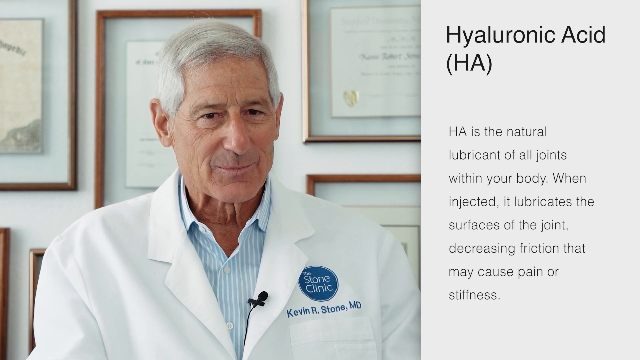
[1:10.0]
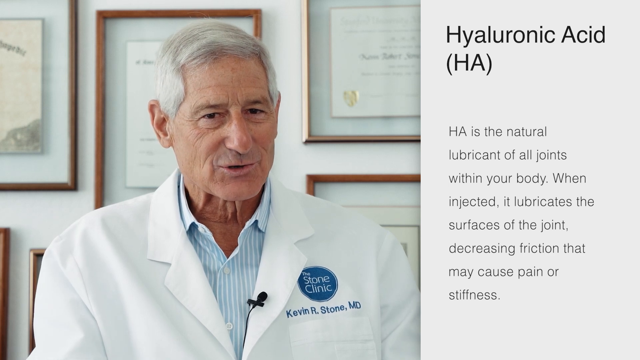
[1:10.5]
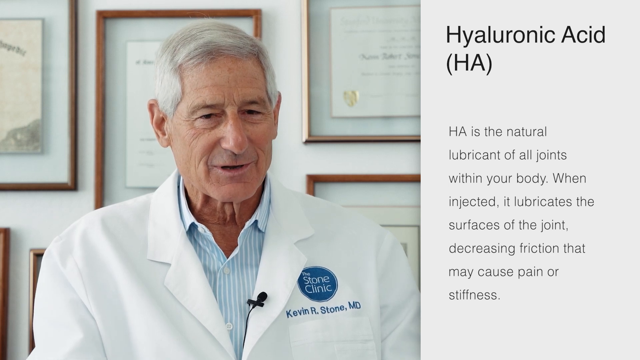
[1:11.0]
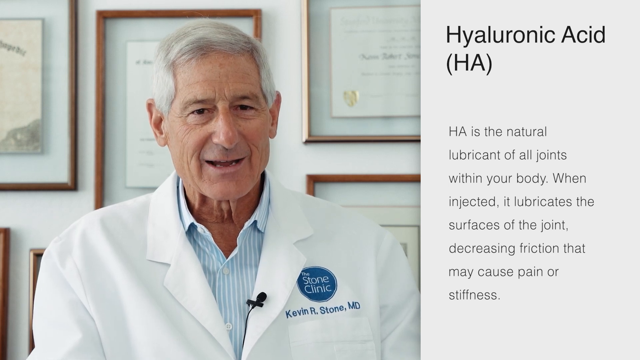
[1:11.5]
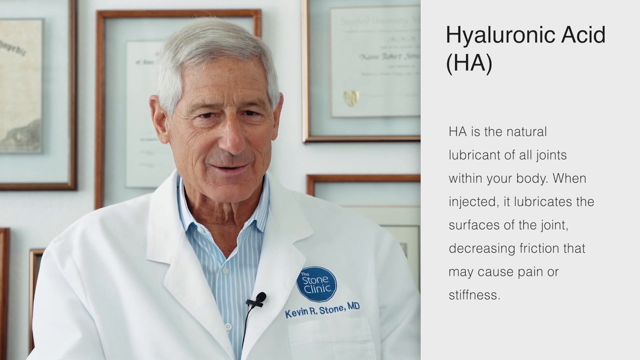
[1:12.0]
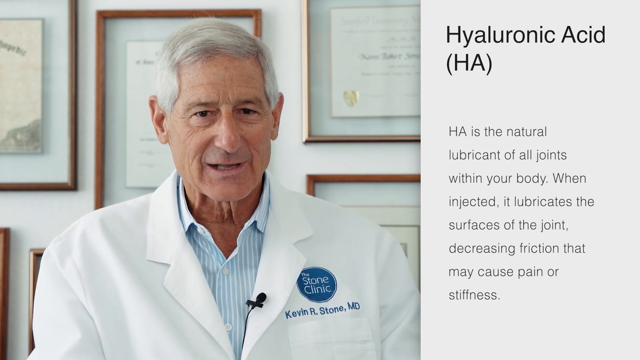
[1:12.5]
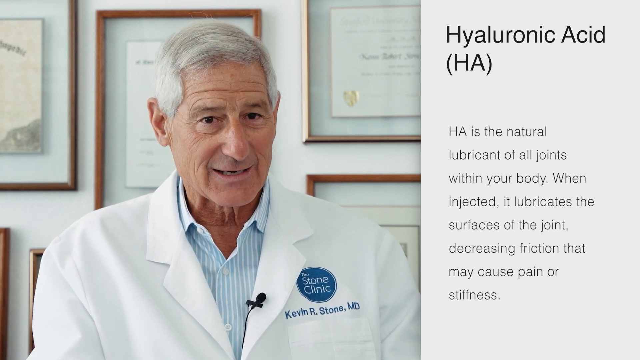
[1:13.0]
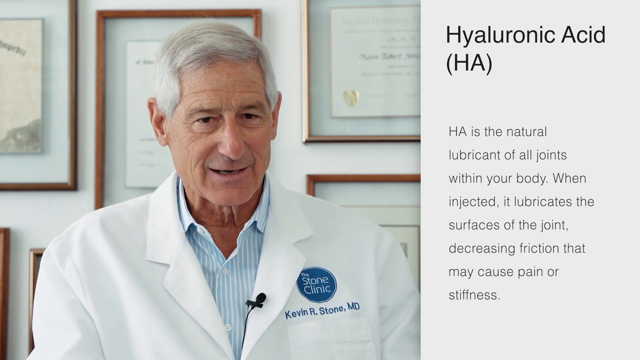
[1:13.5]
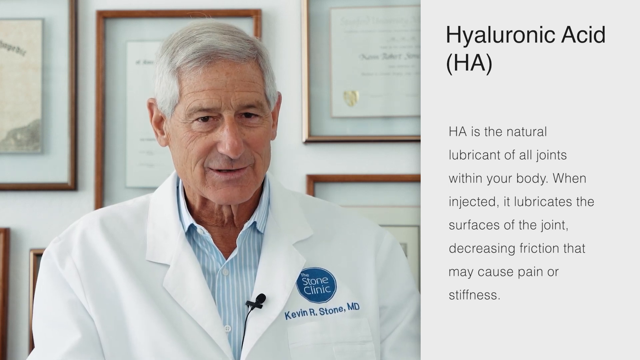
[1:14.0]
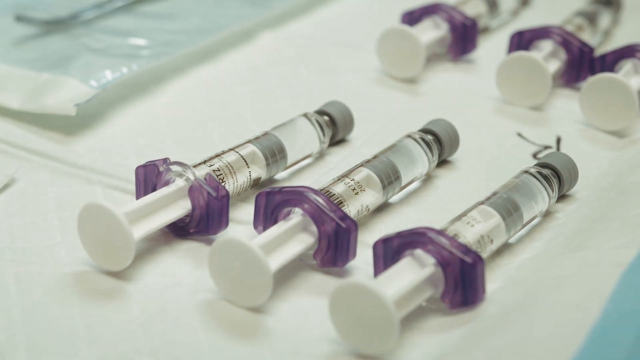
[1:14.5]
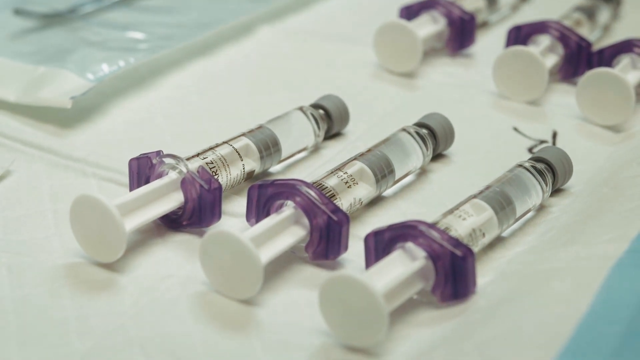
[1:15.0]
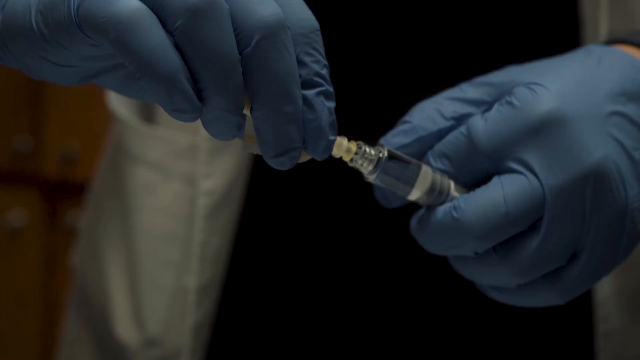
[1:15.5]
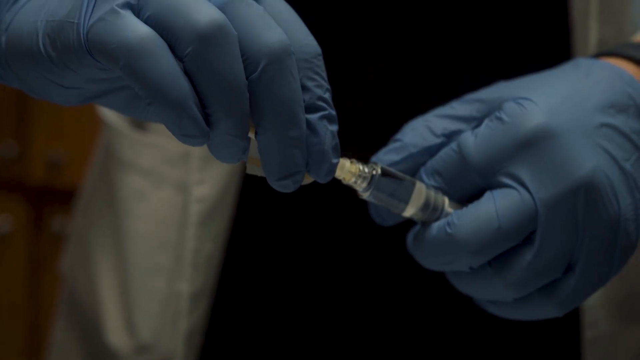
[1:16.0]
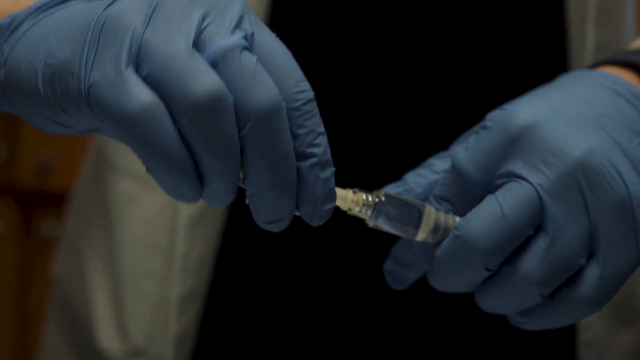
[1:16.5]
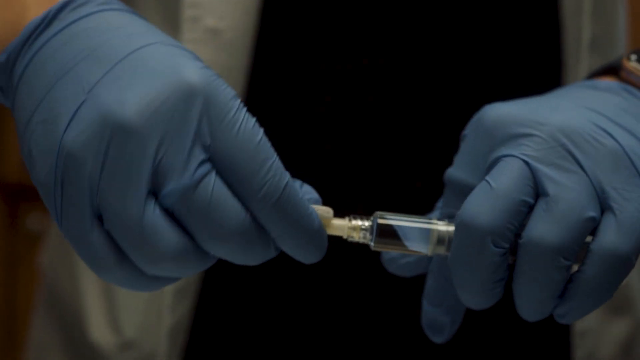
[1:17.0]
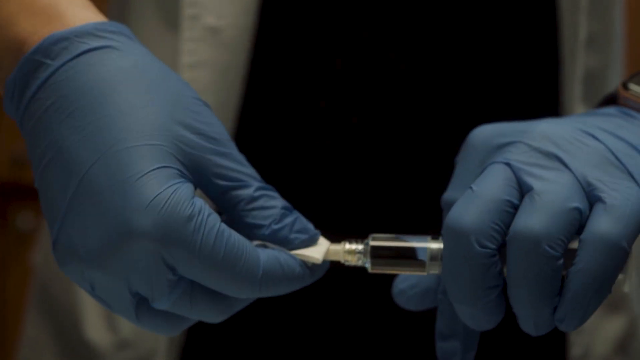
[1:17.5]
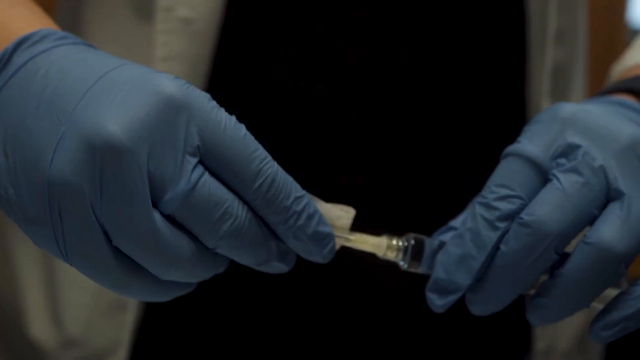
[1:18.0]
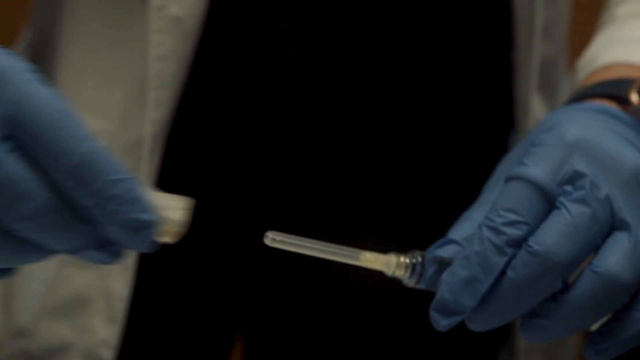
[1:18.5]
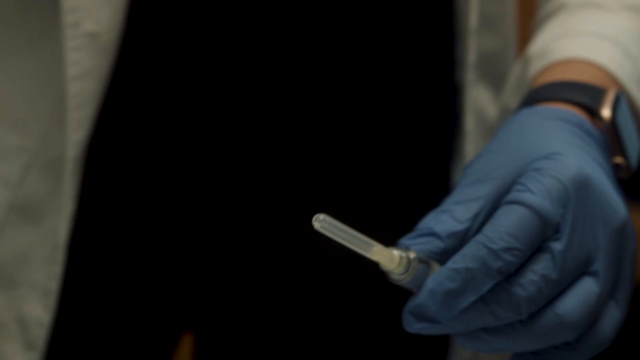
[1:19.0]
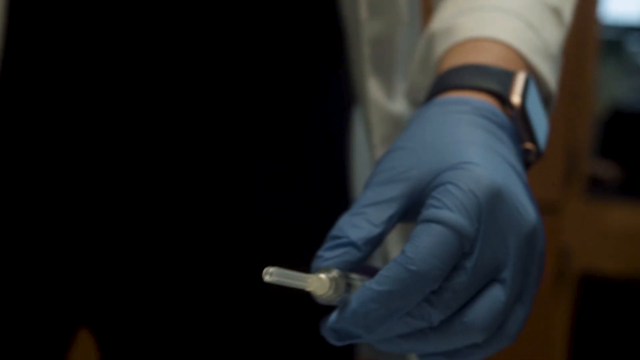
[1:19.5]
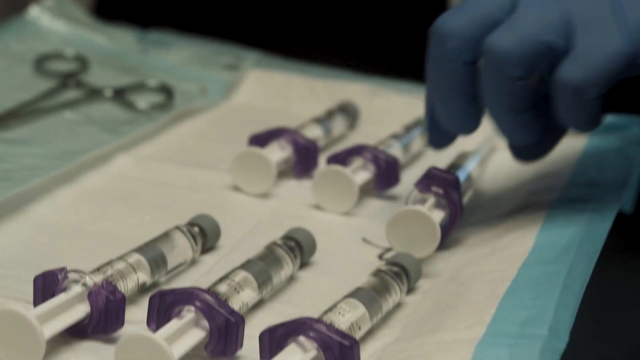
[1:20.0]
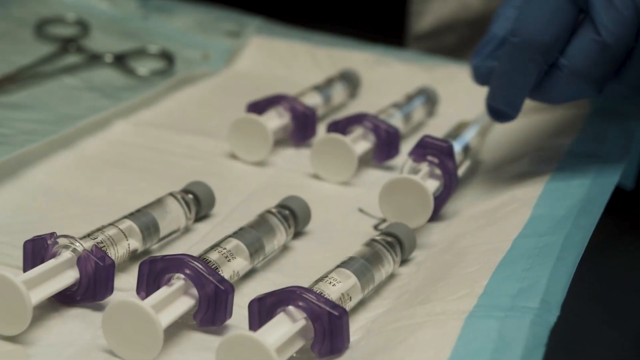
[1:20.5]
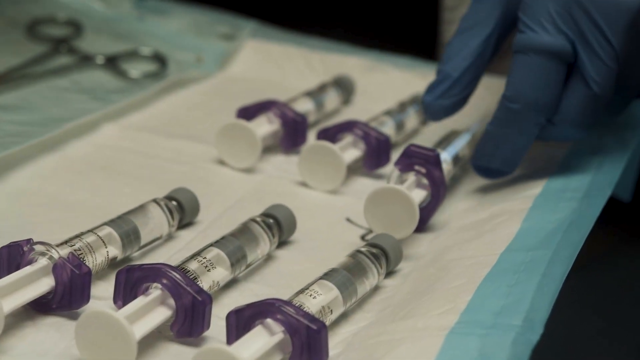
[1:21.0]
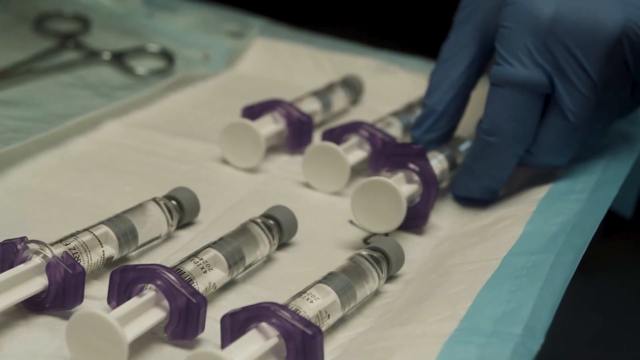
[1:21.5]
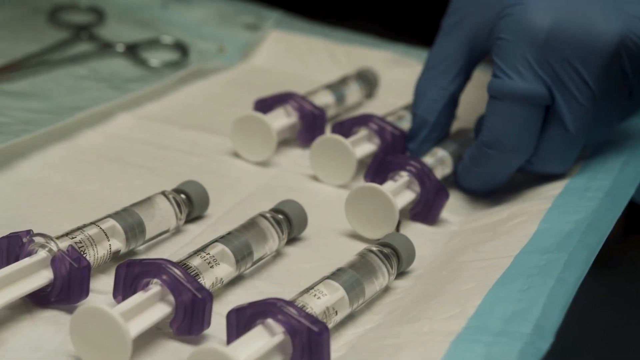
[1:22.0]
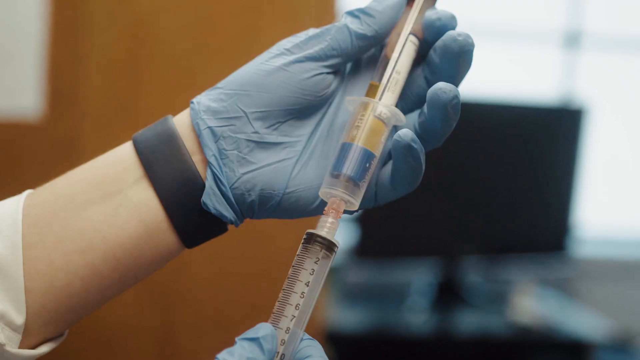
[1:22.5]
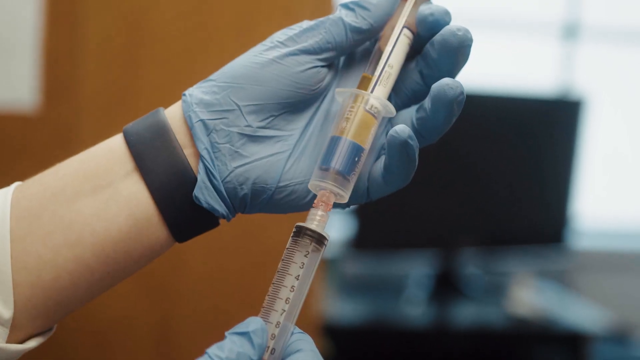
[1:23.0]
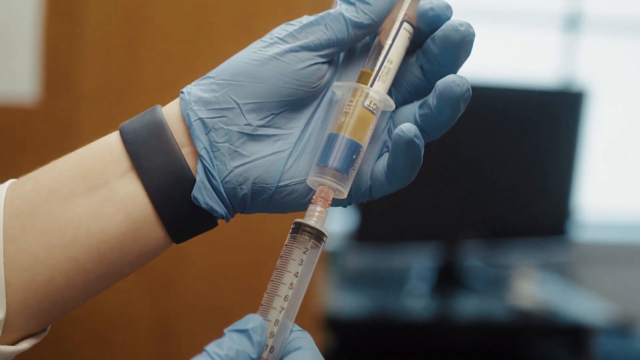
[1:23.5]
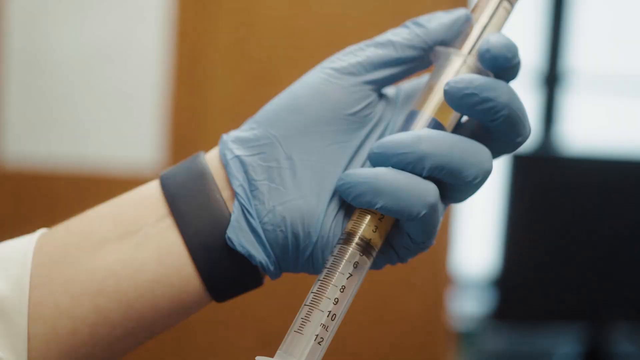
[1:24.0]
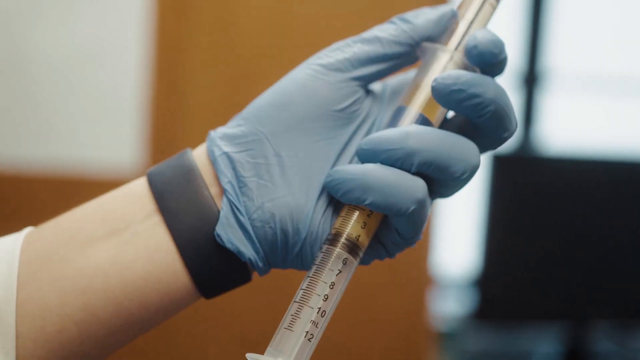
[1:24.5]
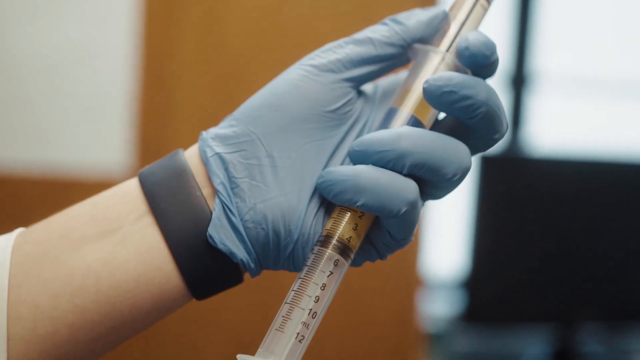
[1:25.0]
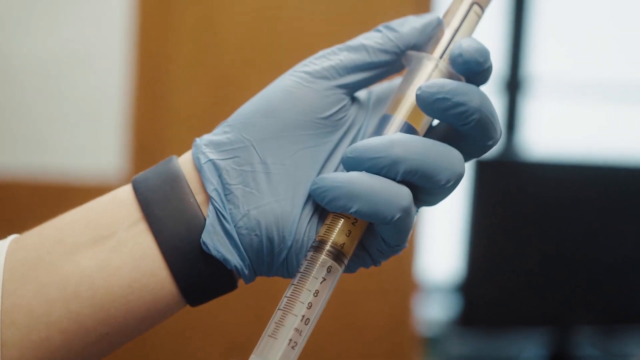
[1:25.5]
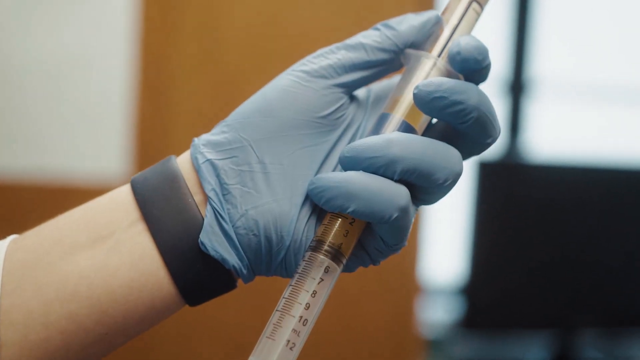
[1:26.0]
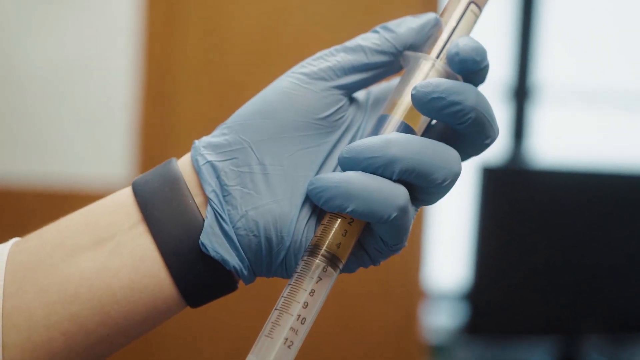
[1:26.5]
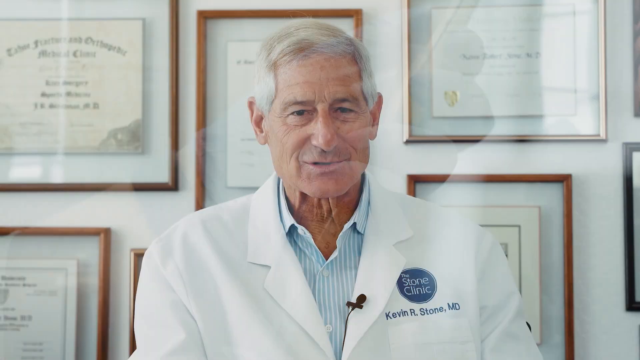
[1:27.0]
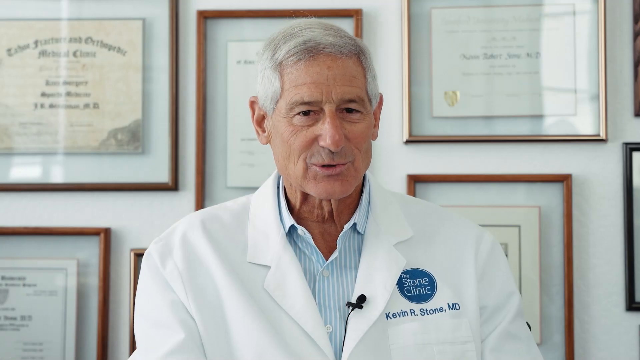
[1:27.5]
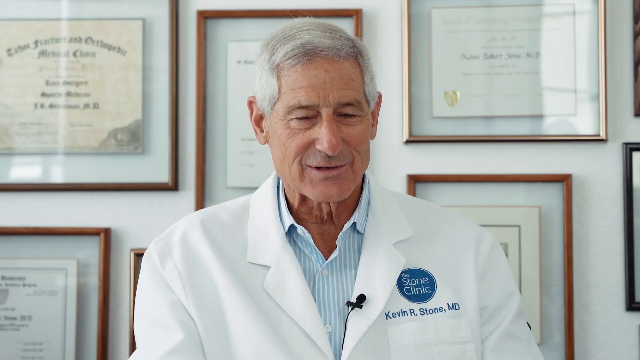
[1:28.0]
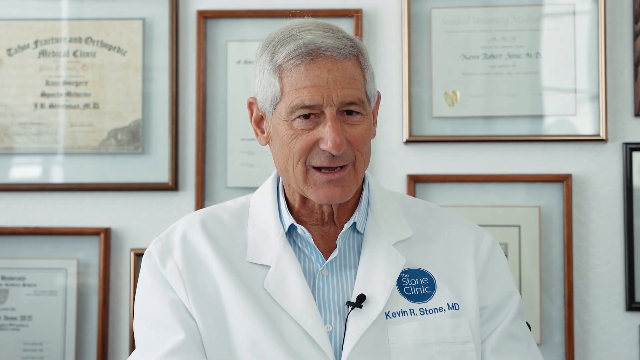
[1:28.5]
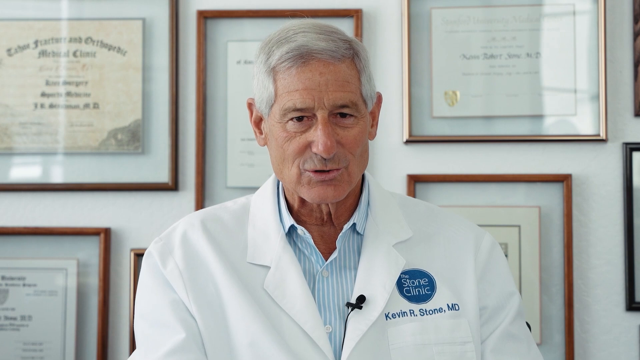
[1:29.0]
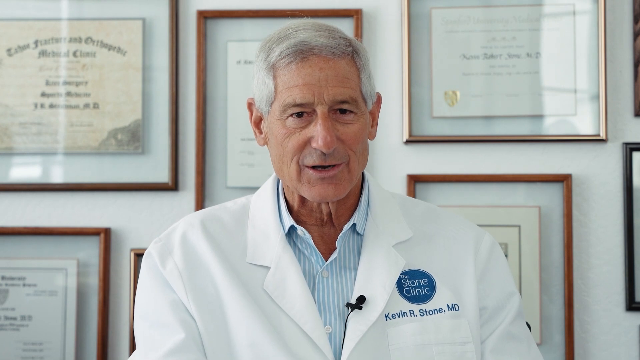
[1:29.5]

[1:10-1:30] Six syringes with vials attached lie on a tray on a table, presumably filled with hyaluronic acid. The syringe and plunger are attached to the vial, which forms part of the syringe. At the end there is a screw or rubber stopper, beneath which the needle is apparently attached. The liquid in the syringes looks like water. The scene changes to a nurse or technician wearing blue surgical gloves unscrewing one of the syringes and putting a cap onto the end of a syringe with a needle. Next, they draw medication from a vial into a large syringe. The video then returns to Dr. Kevin Stone being interviewed in his office.